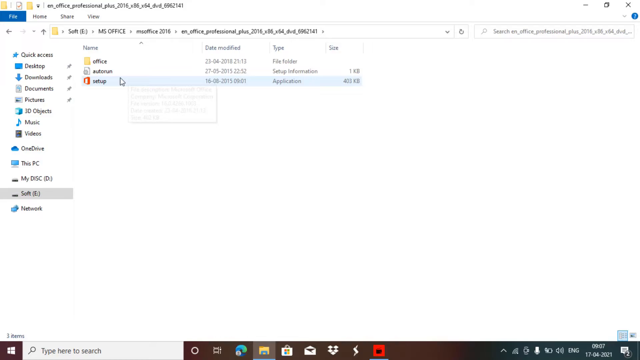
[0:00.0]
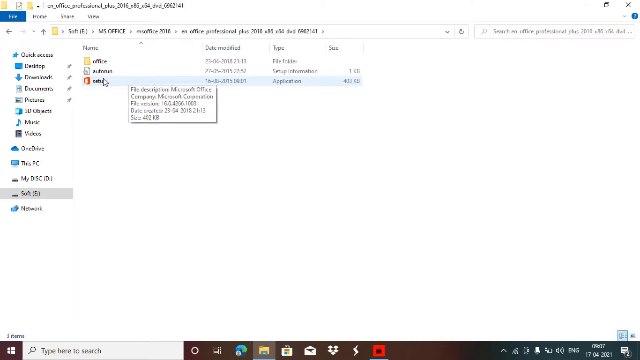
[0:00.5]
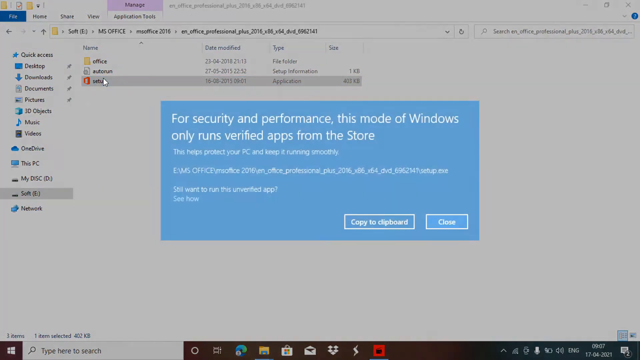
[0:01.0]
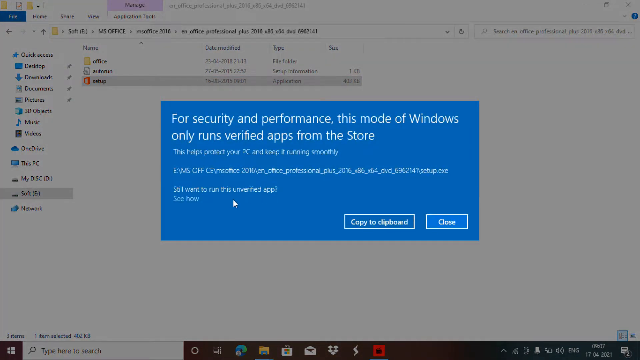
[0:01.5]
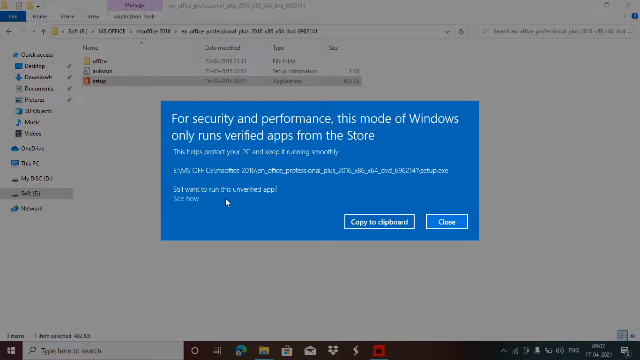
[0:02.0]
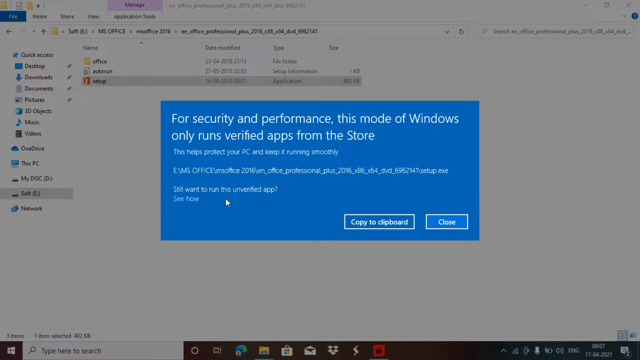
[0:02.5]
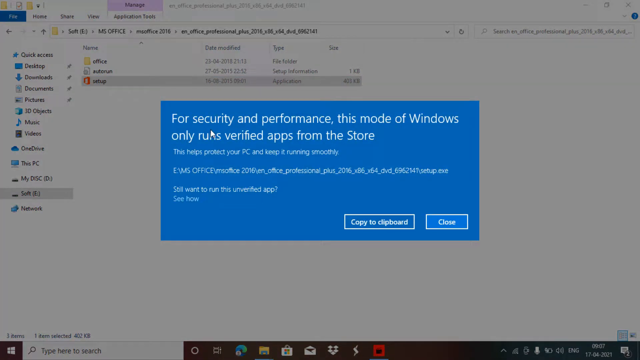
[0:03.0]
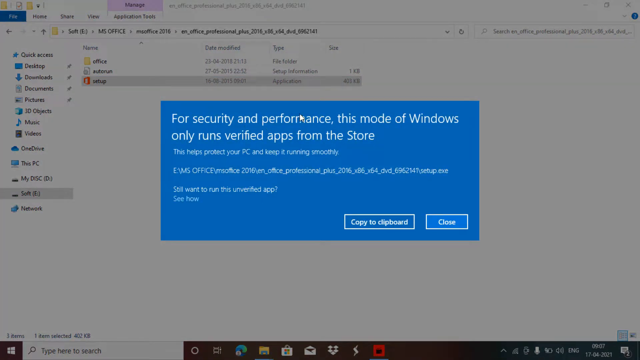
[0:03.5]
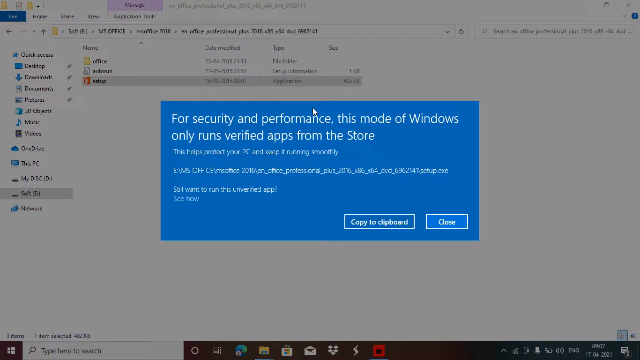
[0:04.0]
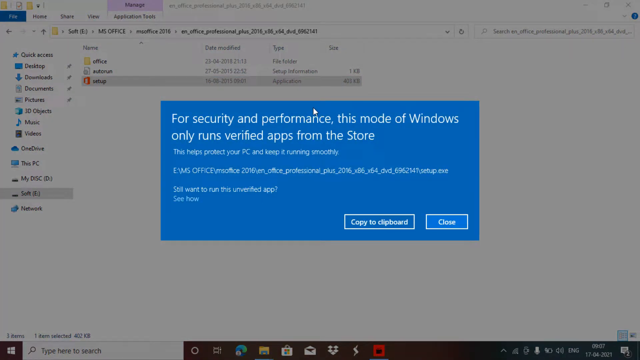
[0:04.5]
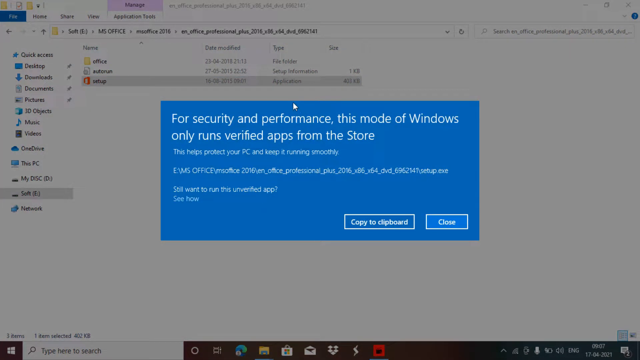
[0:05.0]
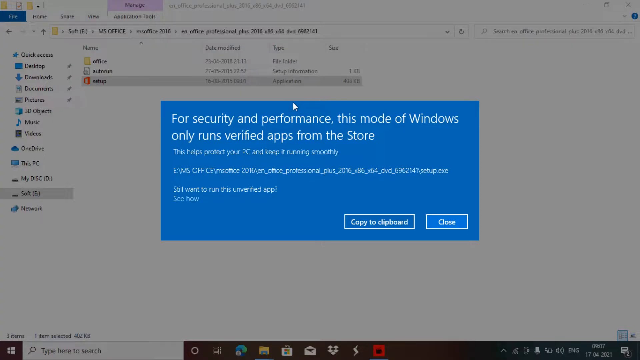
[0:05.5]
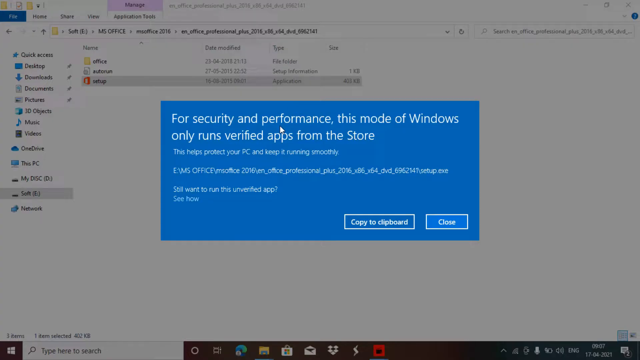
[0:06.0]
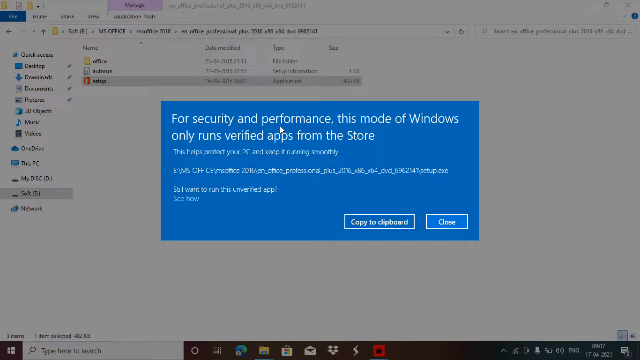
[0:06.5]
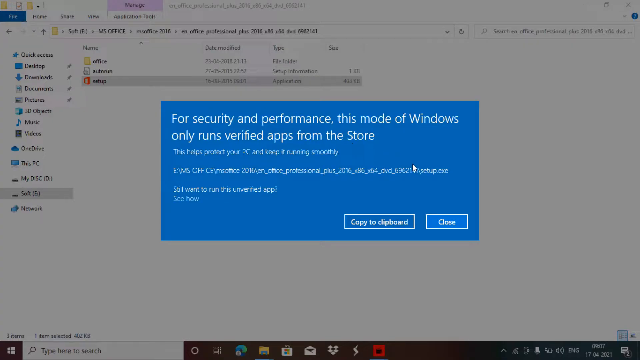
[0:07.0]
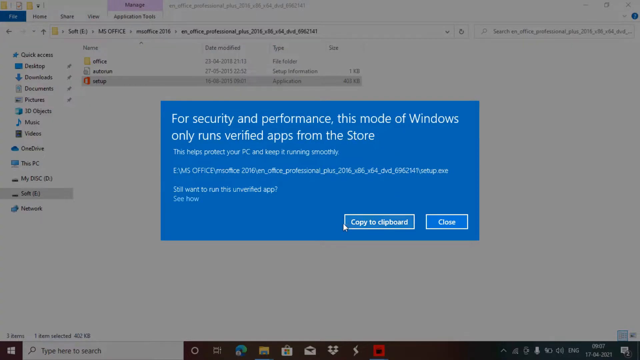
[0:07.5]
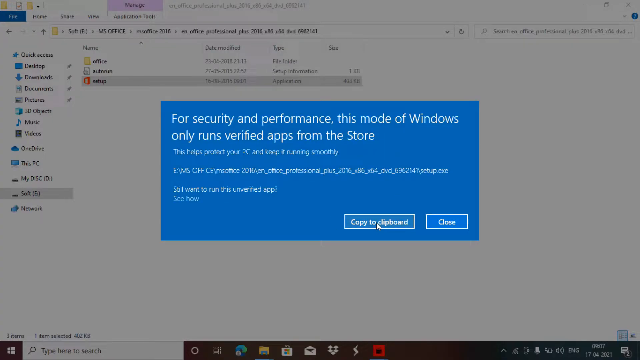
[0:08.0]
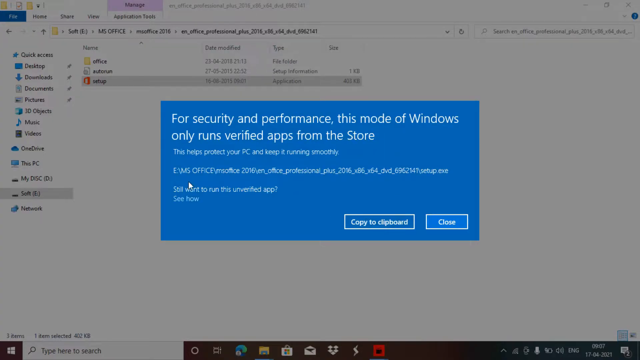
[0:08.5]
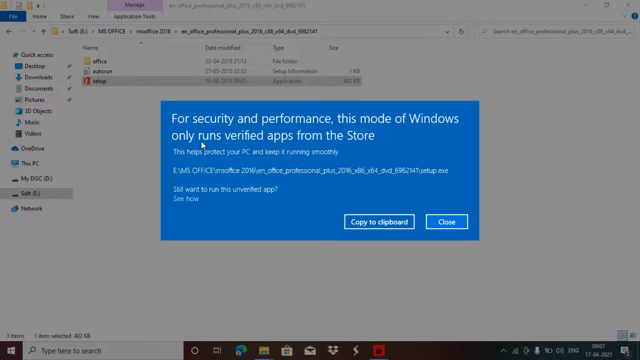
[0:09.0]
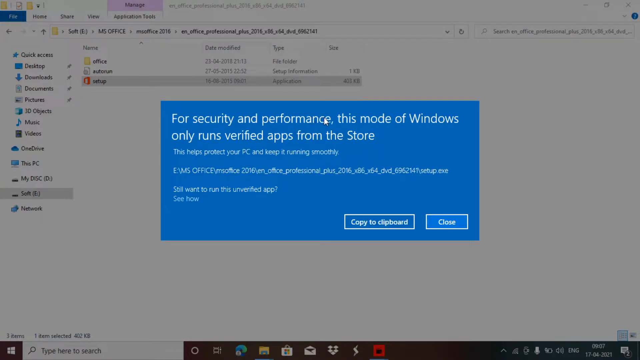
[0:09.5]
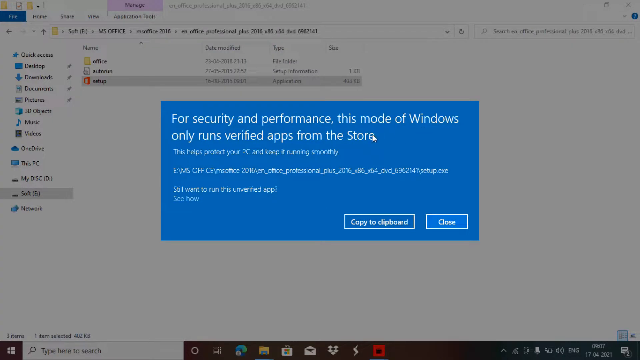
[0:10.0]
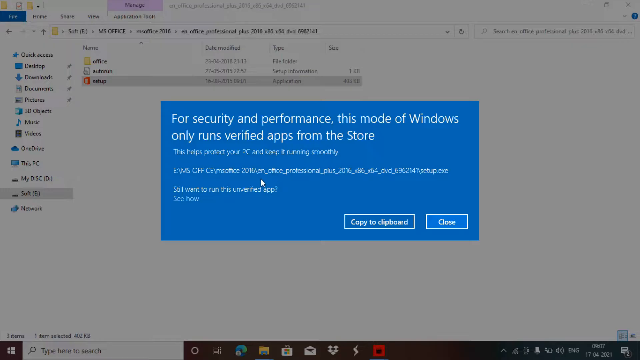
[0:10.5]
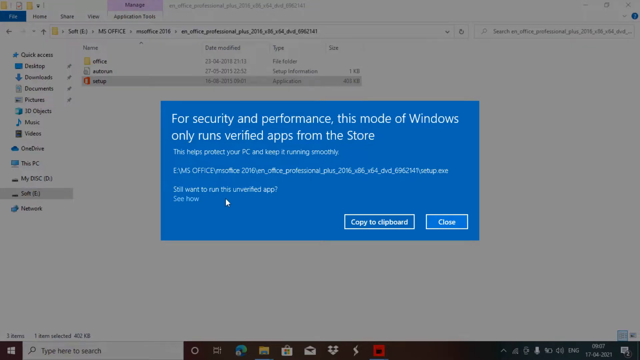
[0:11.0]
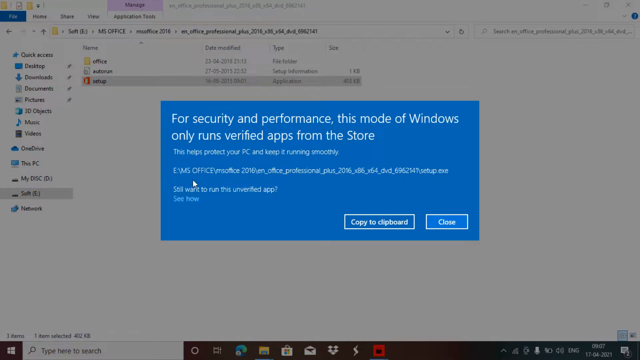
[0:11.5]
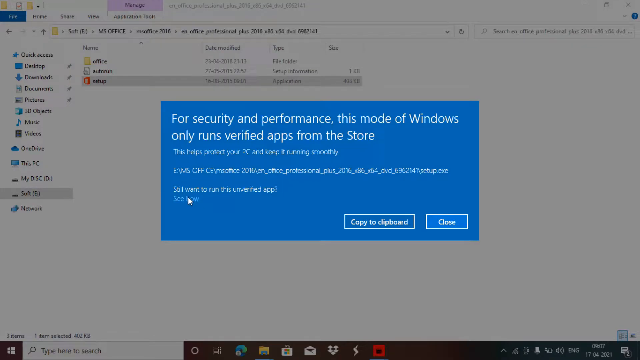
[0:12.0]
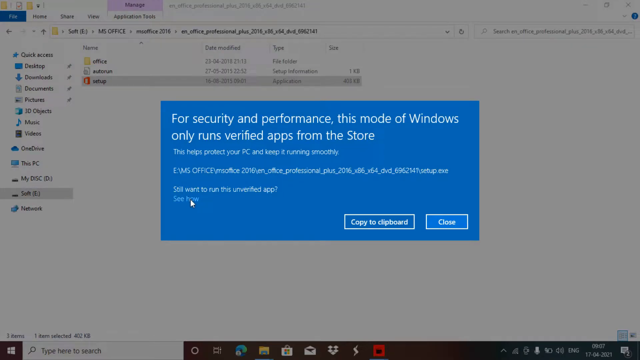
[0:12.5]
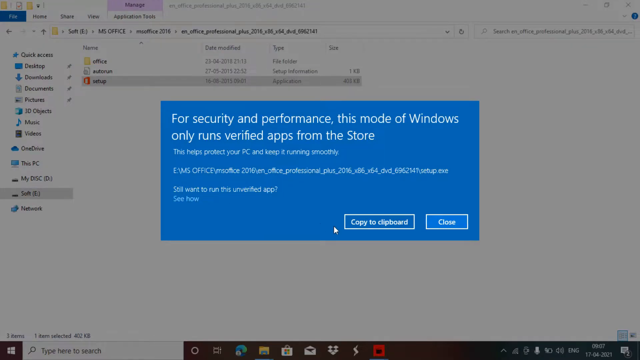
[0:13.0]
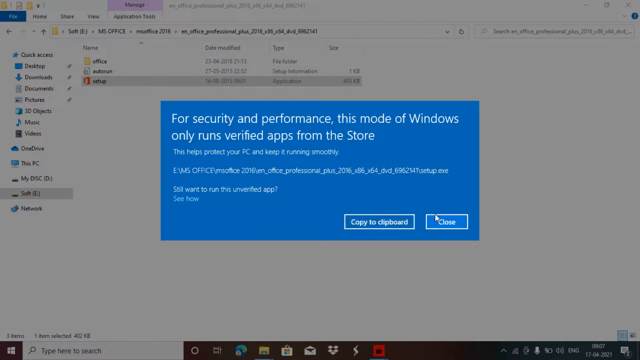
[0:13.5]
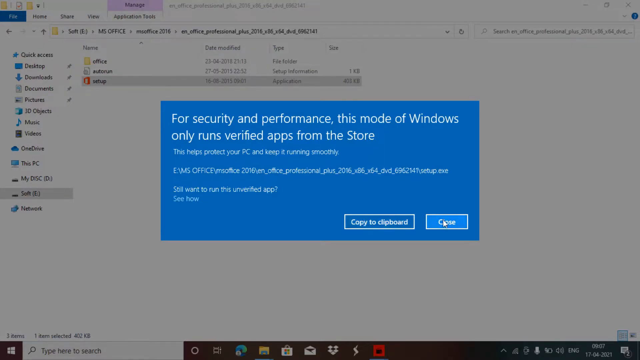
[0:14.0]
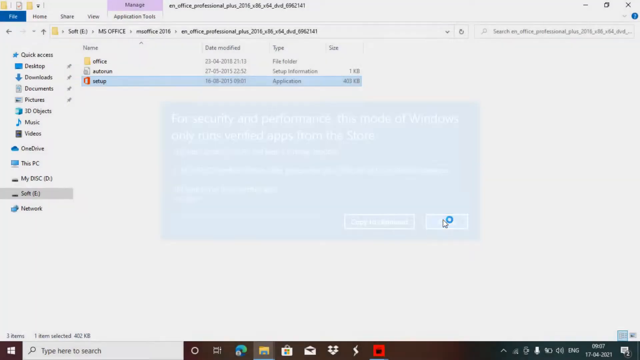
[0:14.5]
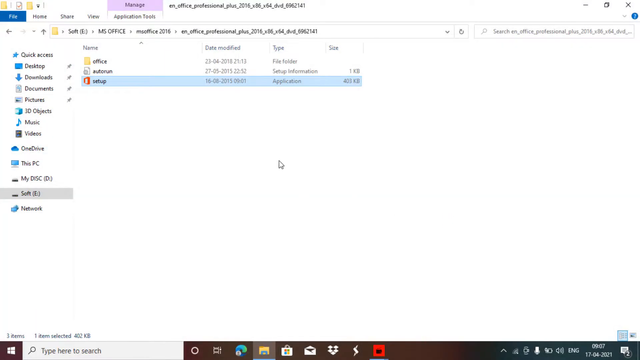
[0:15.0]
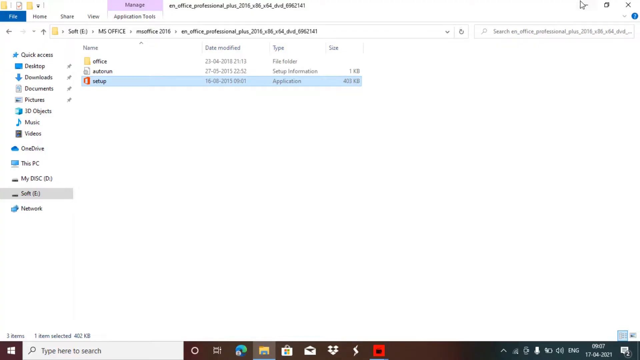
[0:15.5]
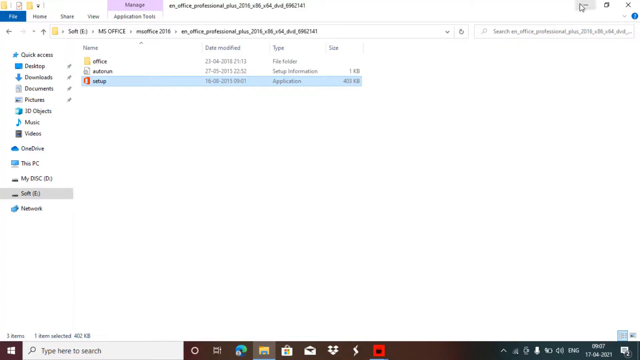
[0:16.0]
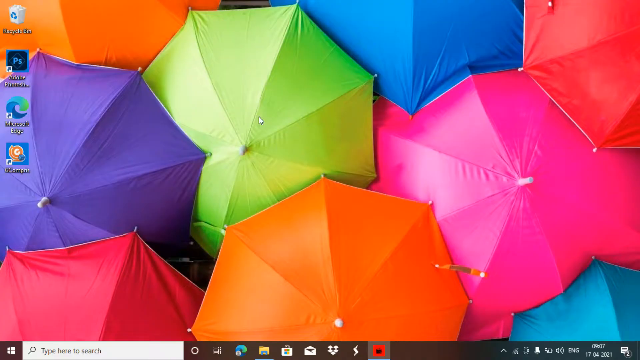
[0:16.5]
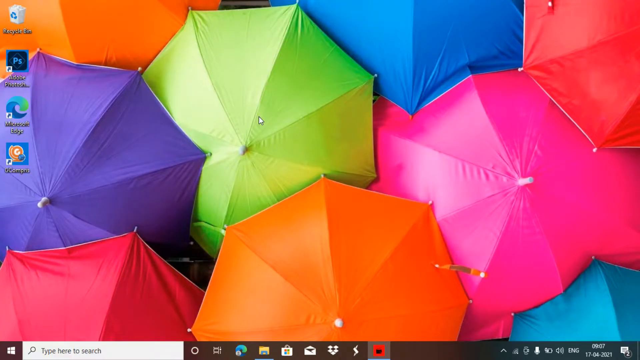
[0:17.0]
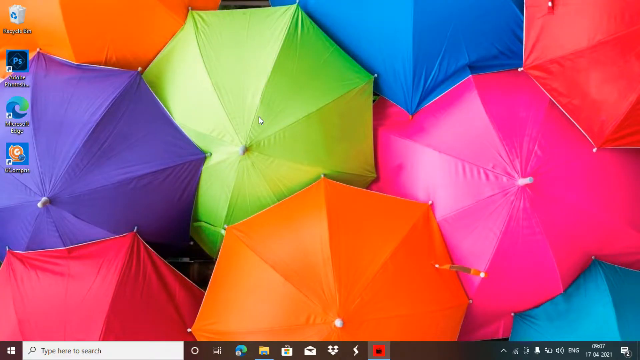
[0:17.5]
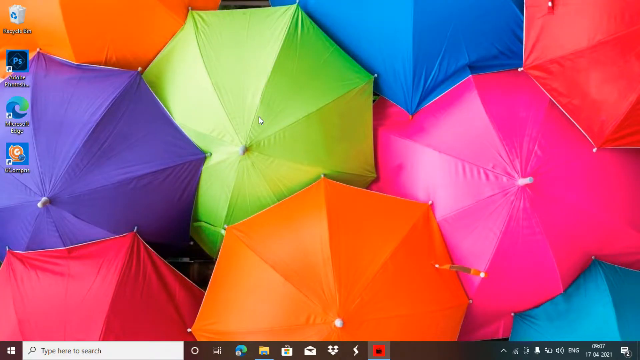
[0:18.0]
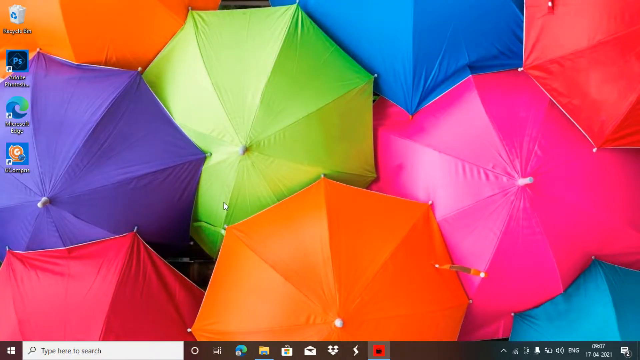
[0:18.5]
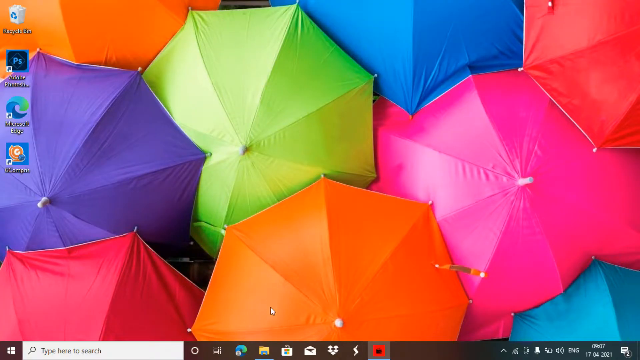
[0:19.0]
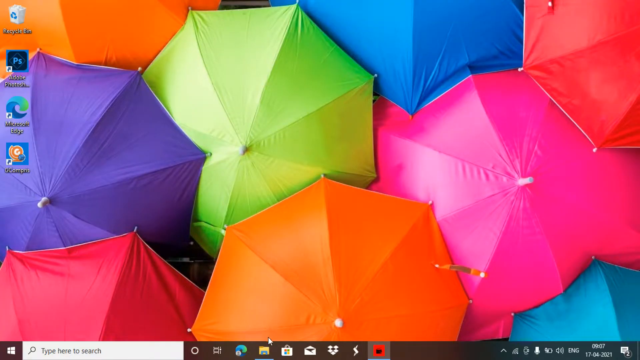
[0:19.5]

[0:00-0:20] A computer screen shows someone's files open, with a blue Windows pop-up that says "for security and performance this mode of Windows only runs verified apps from the store. This helps protect your PC and keep it running smoothly." The mouse kind of hovers over this warning and keeps moving around. The person clicks the close button, then minimizes the file window. The wallpaper shows many colorful open umbrellas seen from the top, kind of overlapping each other, in orange, green, purple, pink, red and blue. The computer seems to be running Windows 10, based on the black taskbar with a search bar, and the Photoshop app is on the taskbar.